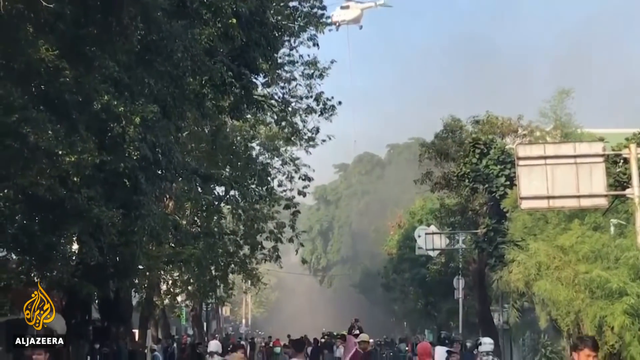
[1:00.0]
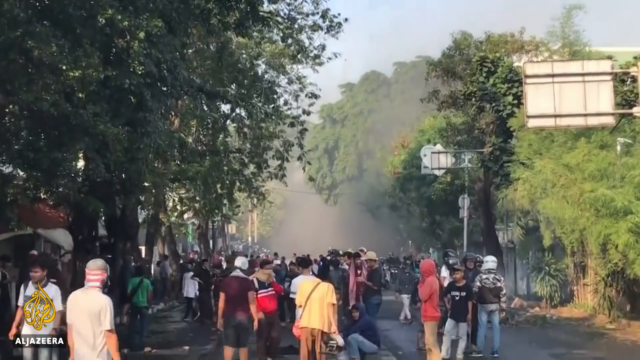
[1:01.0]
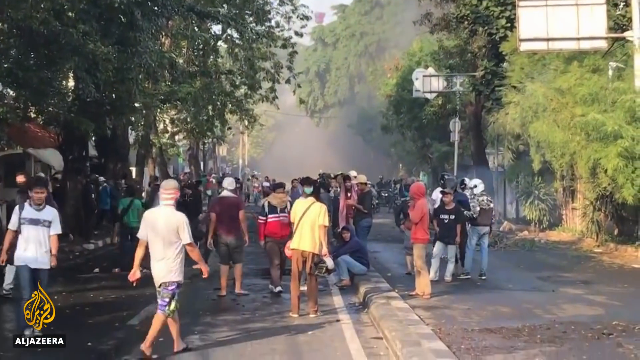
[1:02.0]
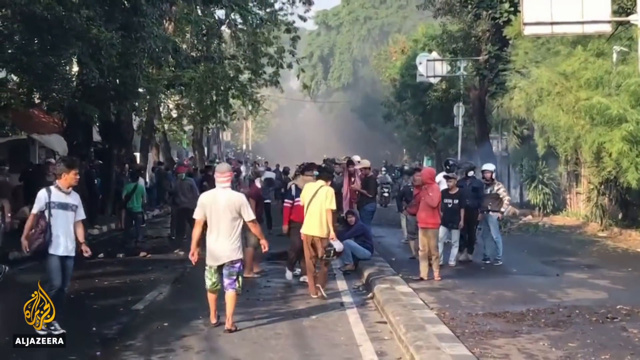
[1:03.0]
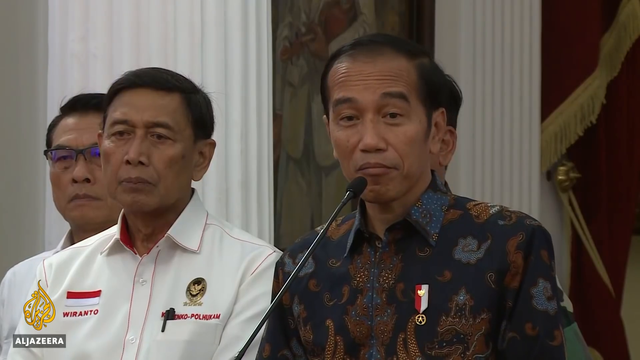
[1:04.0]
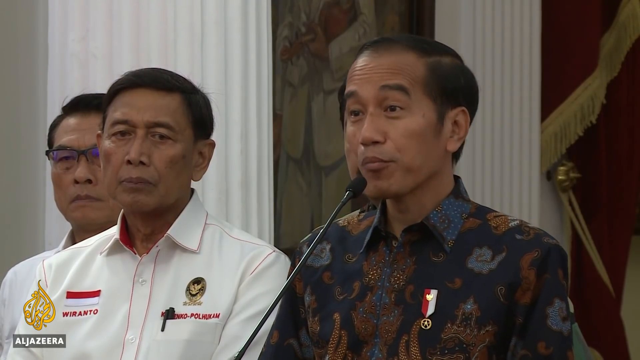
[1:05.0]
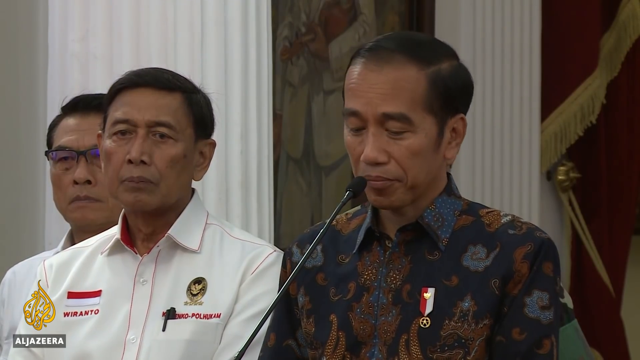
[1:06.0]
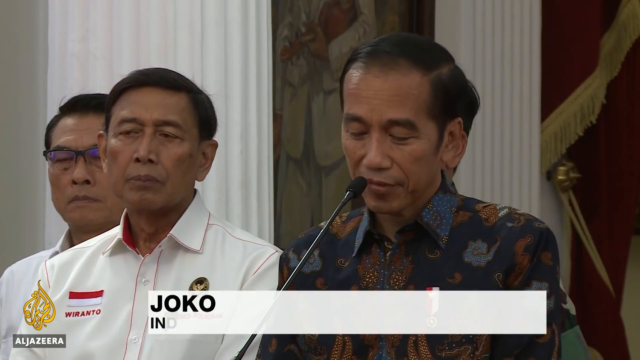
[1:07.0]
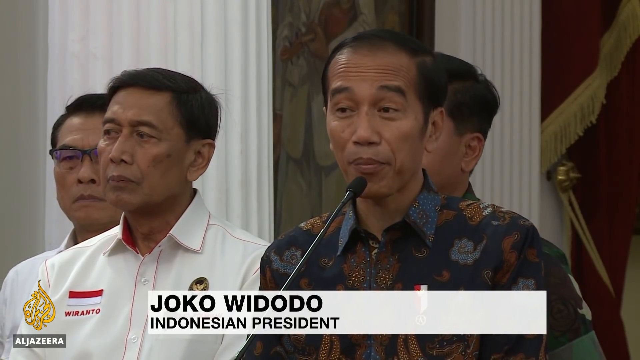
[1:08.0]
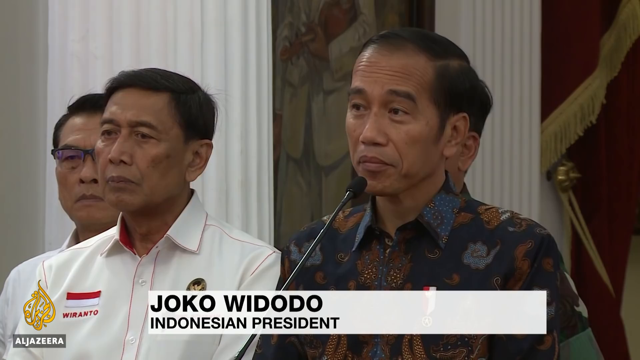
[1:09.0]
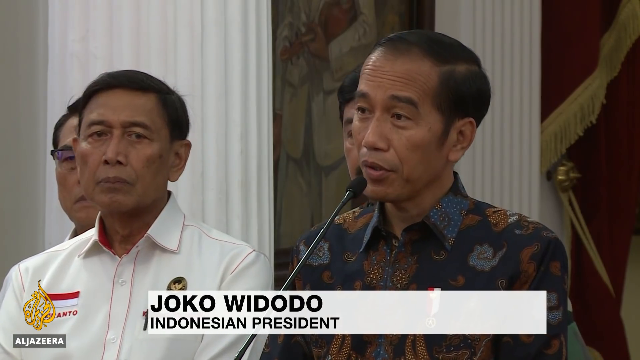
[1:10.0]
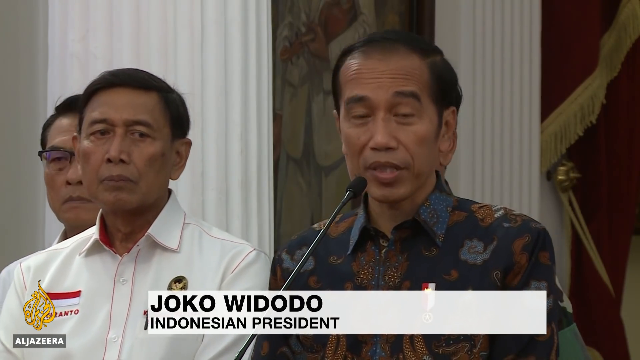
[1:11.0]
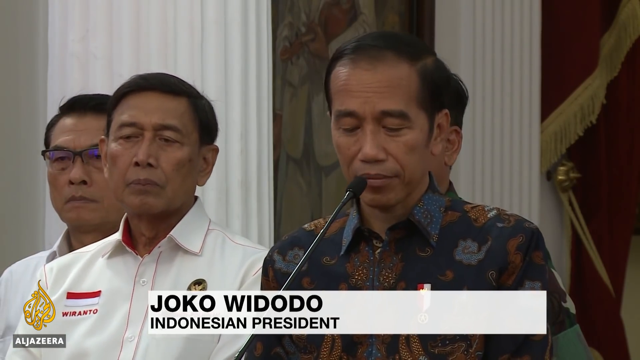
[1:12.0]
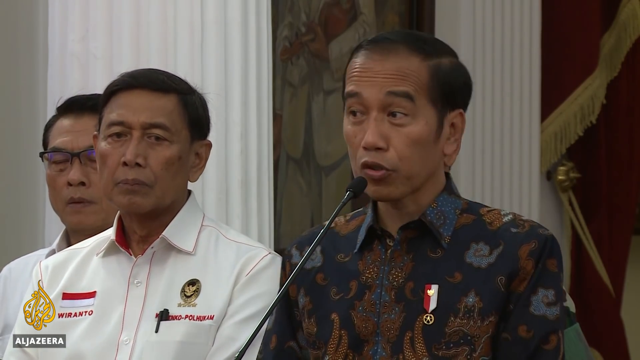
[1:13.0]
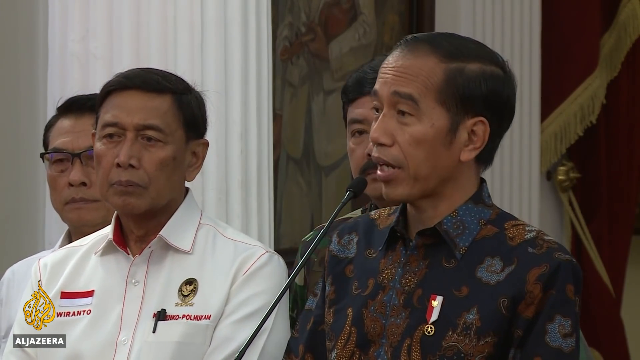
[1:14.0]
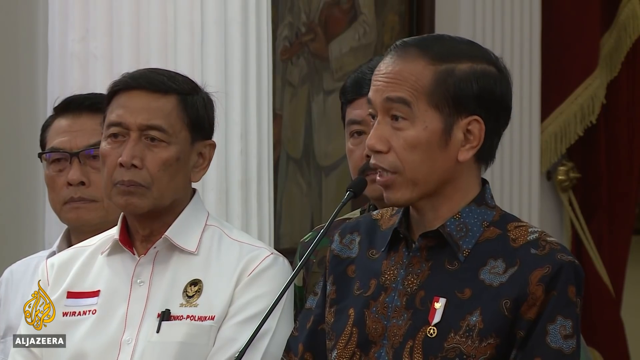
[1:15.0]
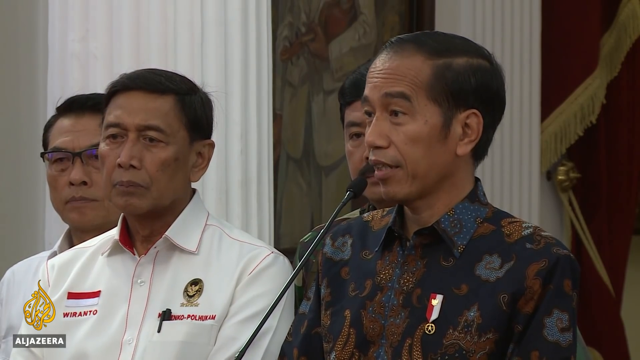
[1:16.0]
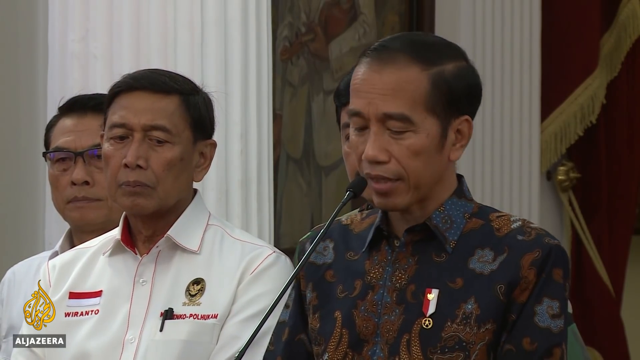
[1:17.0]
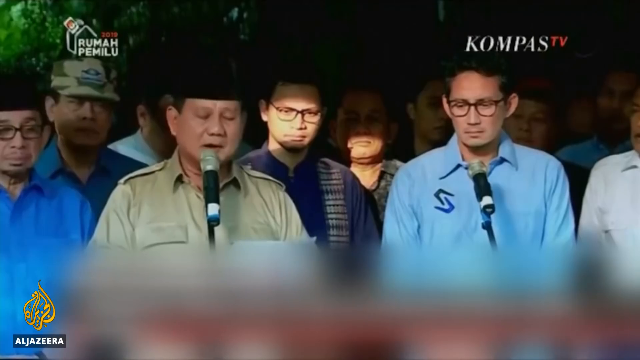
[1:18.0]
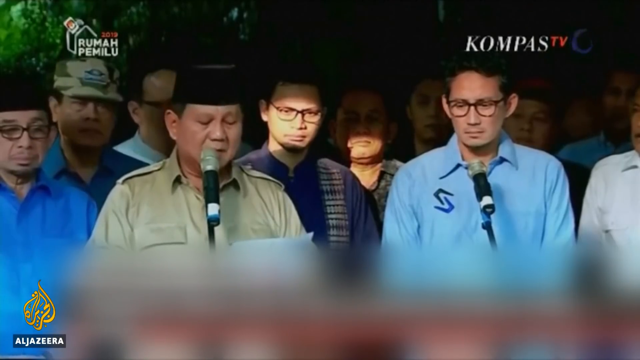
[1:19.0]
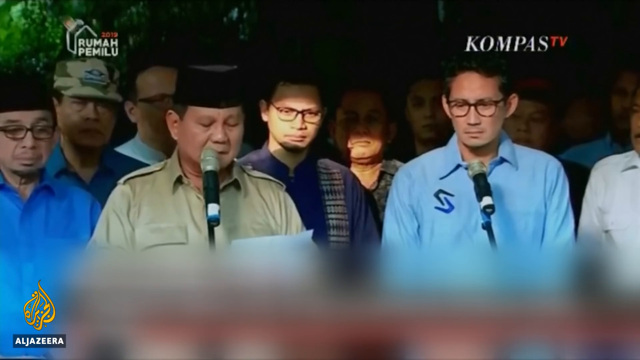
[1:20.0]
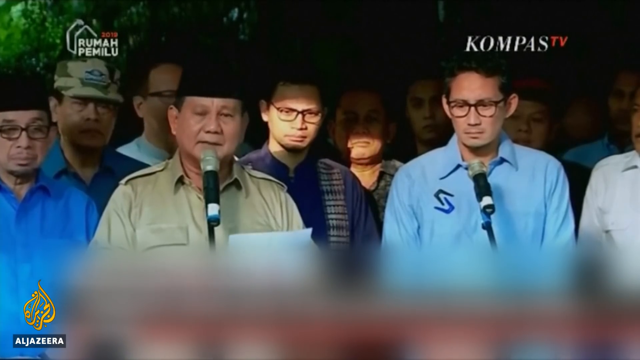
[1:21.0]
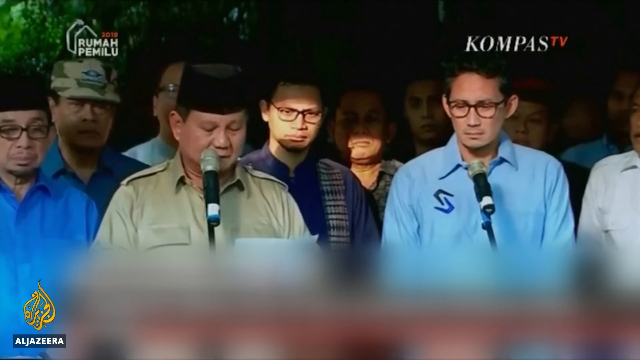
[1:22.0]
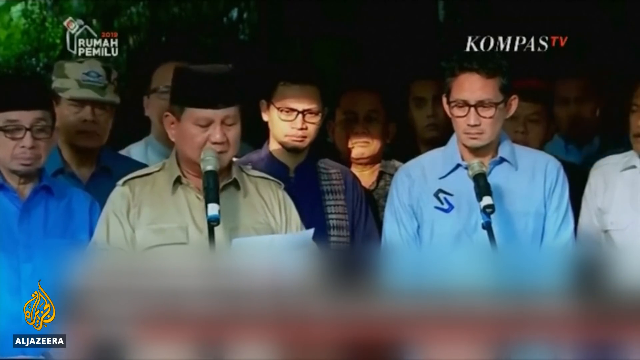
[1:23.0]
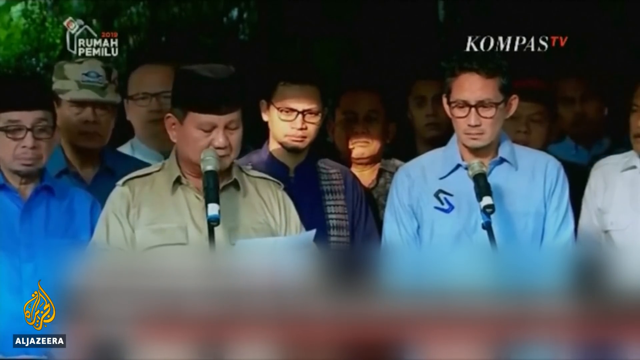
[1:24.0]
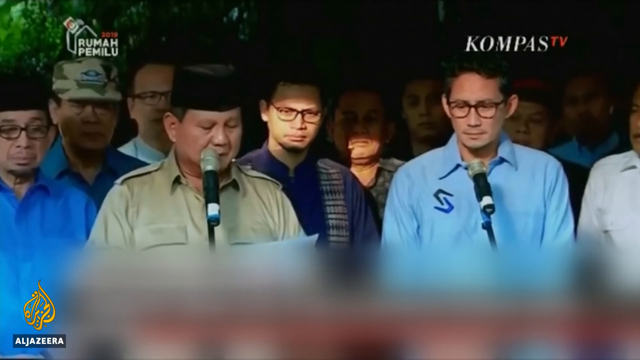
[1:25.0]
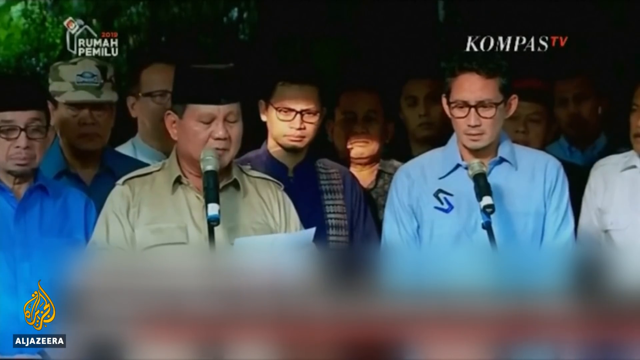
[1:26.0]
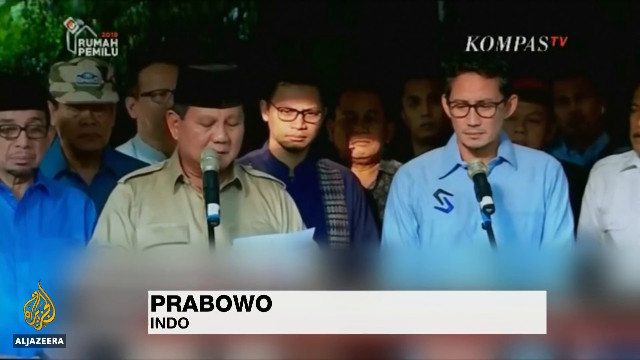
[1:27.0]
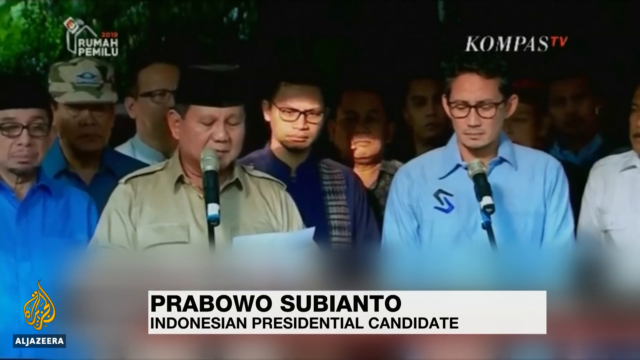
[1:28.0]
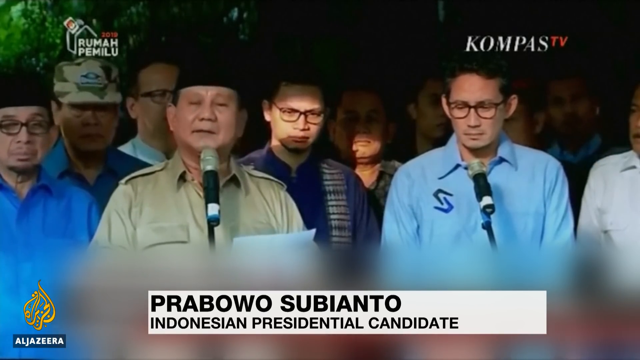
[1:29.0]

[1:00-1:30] Many people, a lot of them young, fill the street during a riot in Indonesia. A man identified as Joko Widodo, the Indonesian president, speaks into a microphone while some men stand with him, and behind him is a flag of some sort, red with fringe. The Algeria TV logo is in the lower left-hand corner. Then Compass TV shows a man speaking; his name and title at the bottom are blurred out. He wears a tan uniform and has a lot of people around him as he addresses the audience. Clips of the riot show tear gas, explosions, and streets full of people.